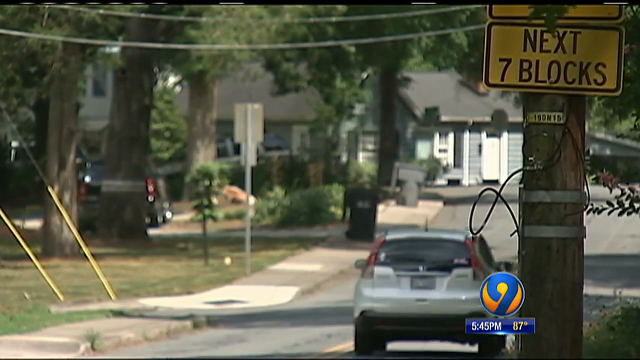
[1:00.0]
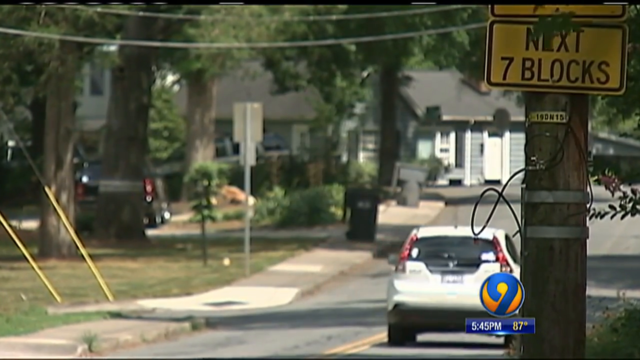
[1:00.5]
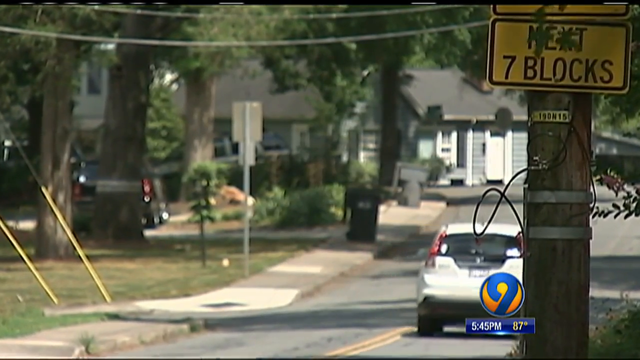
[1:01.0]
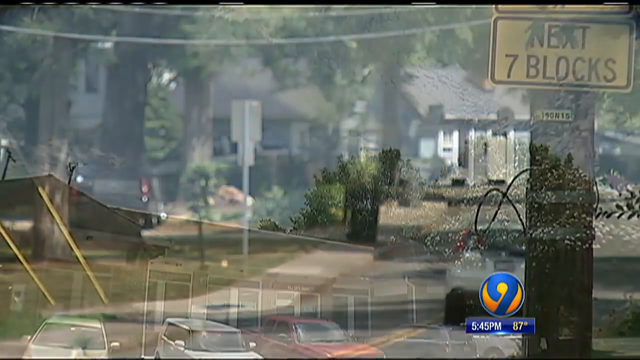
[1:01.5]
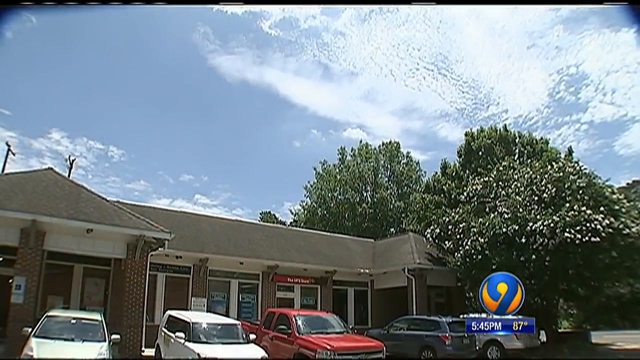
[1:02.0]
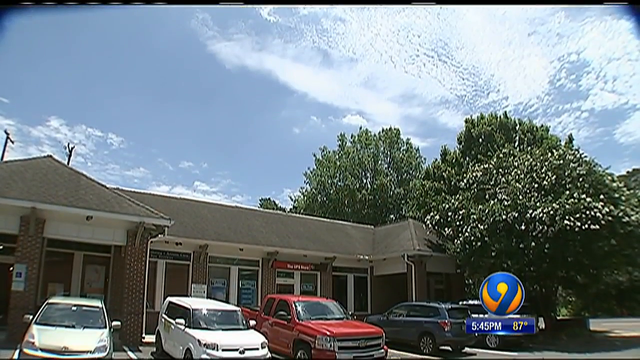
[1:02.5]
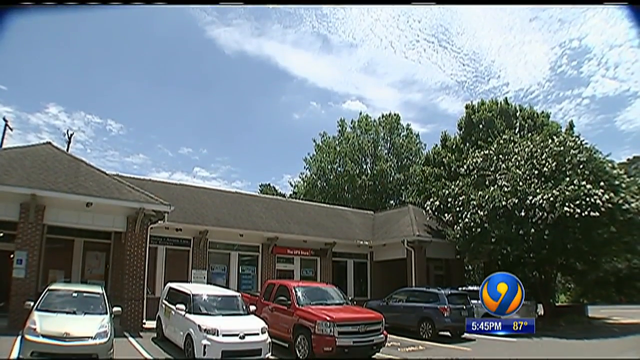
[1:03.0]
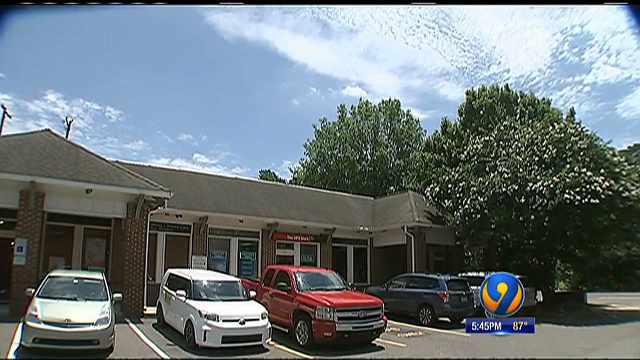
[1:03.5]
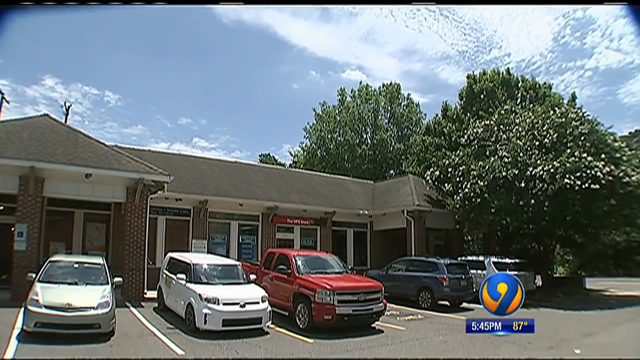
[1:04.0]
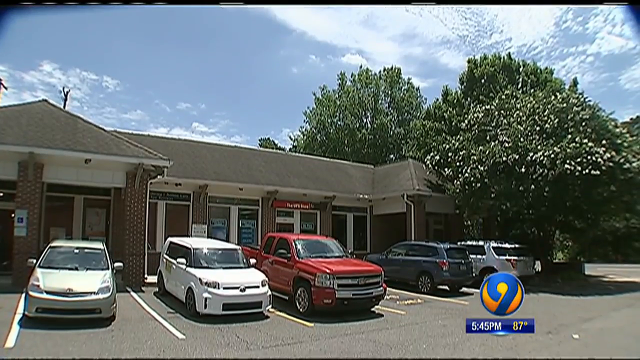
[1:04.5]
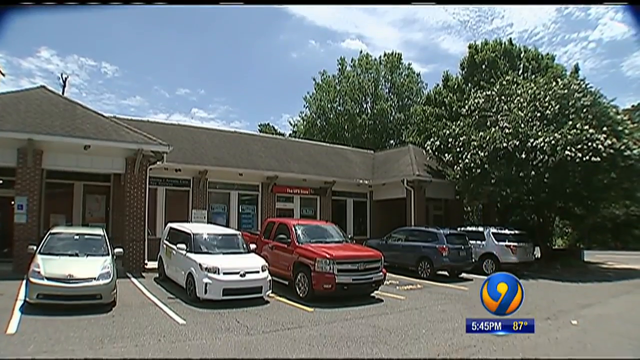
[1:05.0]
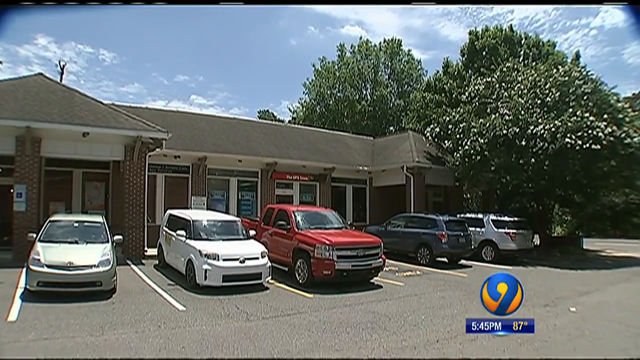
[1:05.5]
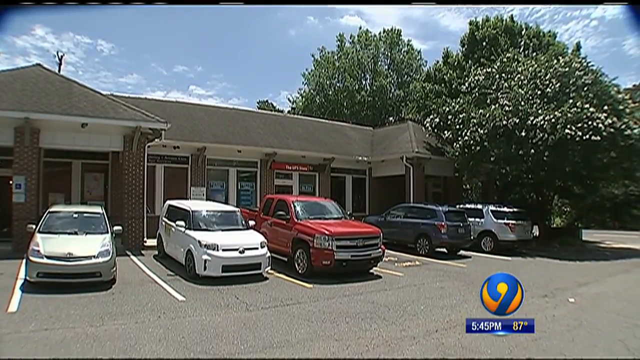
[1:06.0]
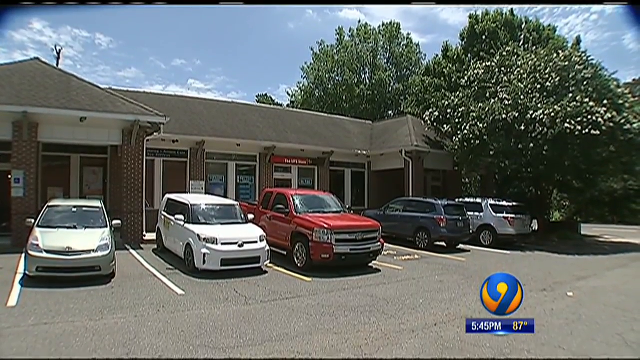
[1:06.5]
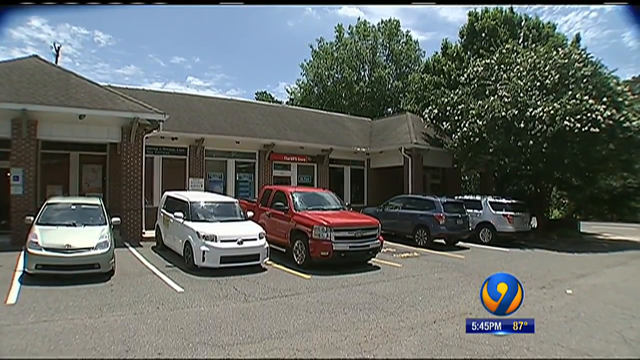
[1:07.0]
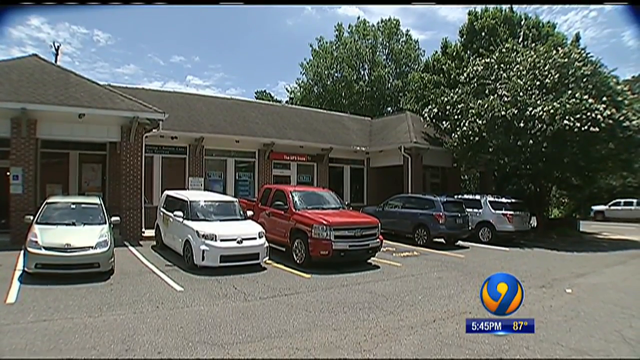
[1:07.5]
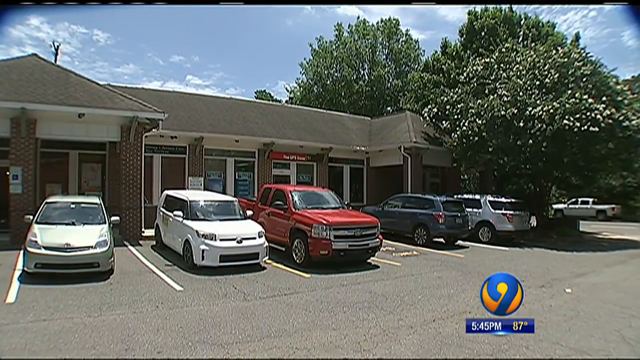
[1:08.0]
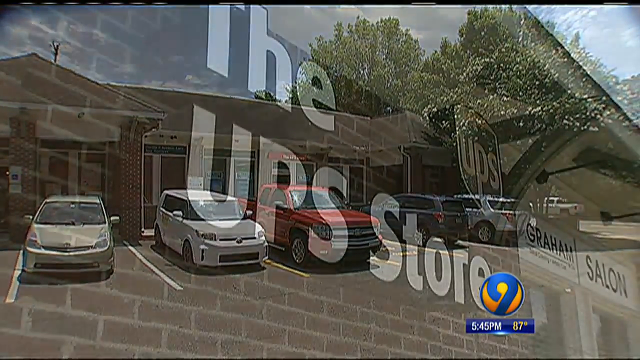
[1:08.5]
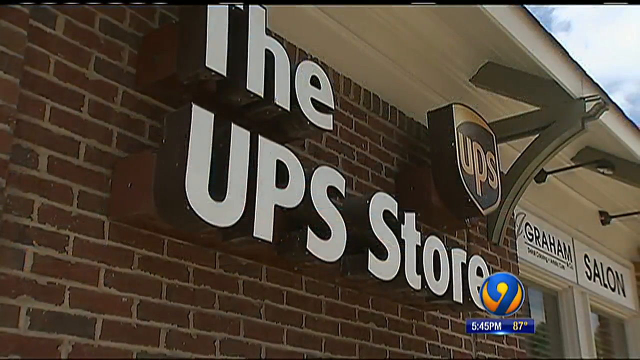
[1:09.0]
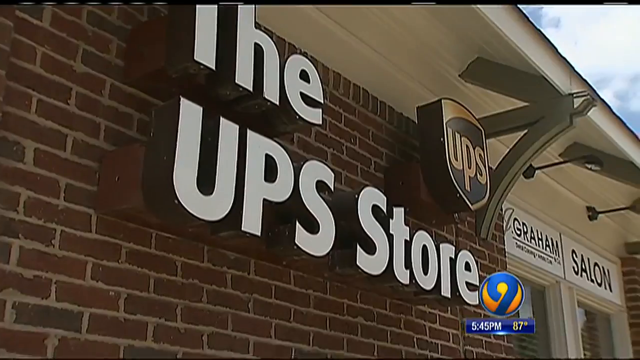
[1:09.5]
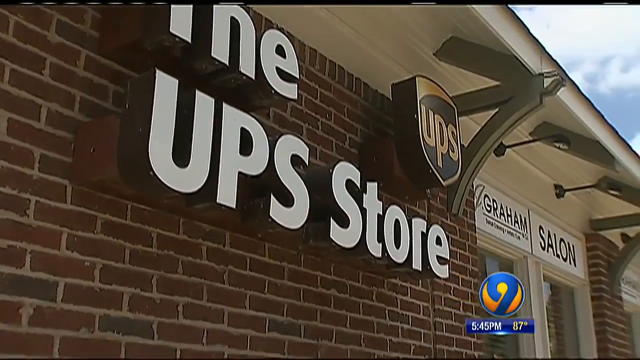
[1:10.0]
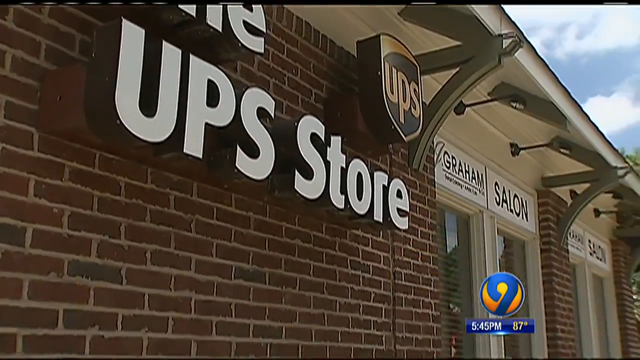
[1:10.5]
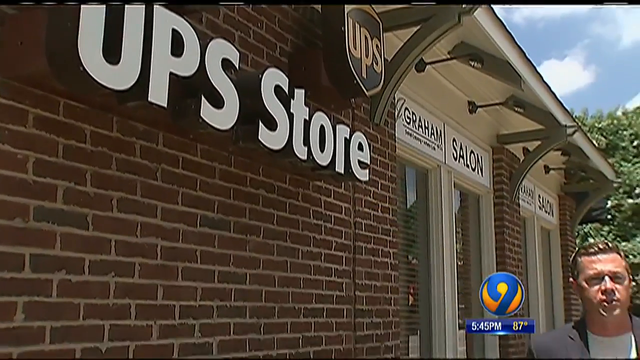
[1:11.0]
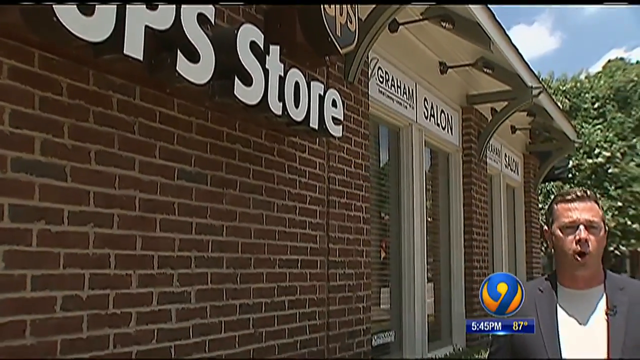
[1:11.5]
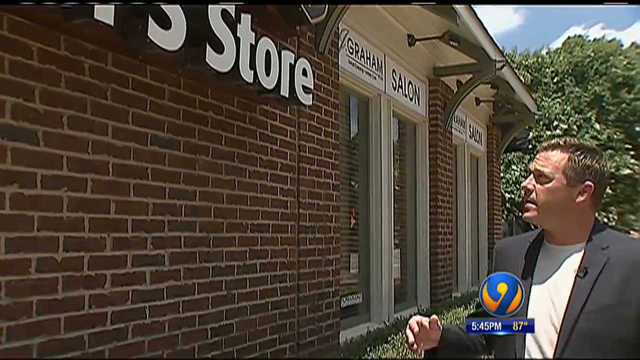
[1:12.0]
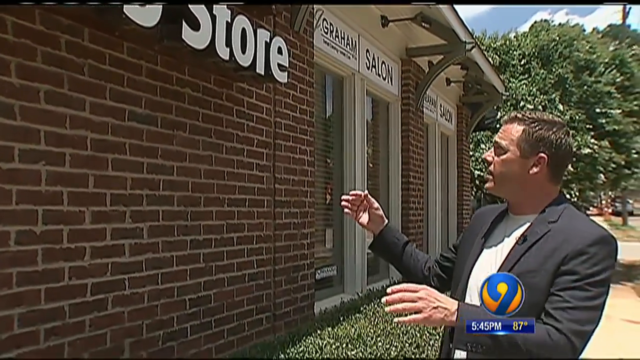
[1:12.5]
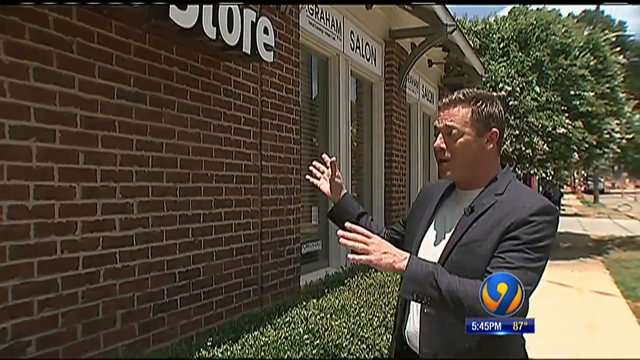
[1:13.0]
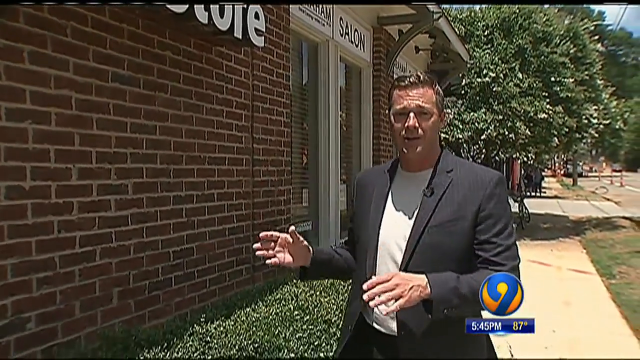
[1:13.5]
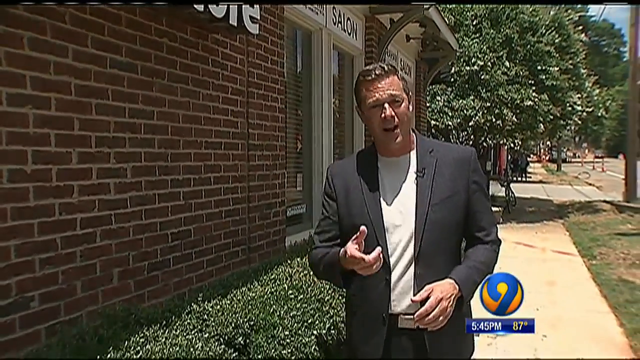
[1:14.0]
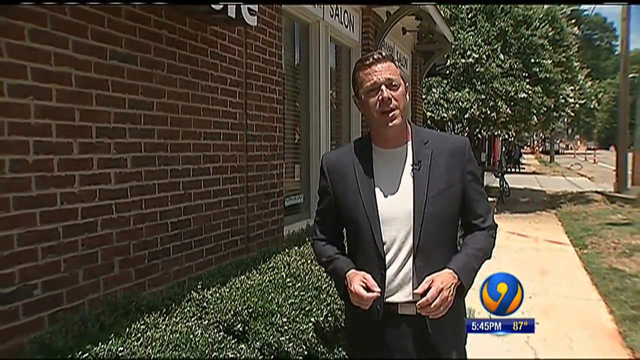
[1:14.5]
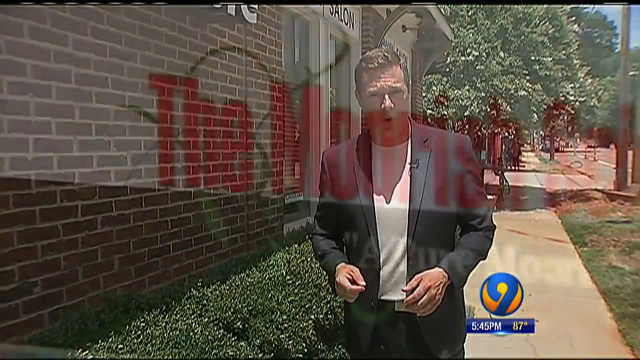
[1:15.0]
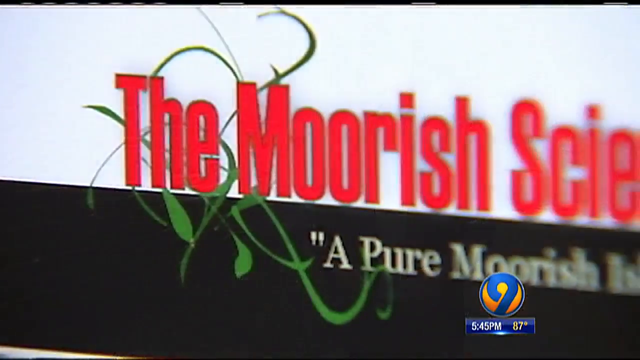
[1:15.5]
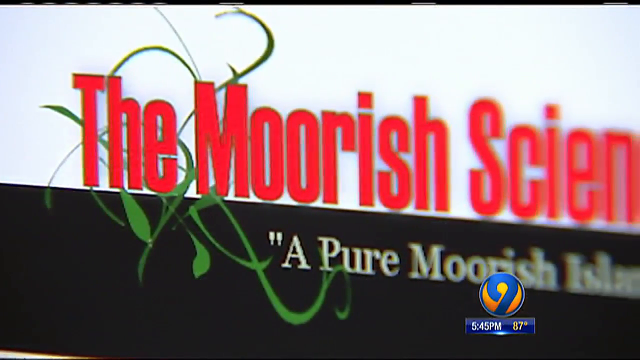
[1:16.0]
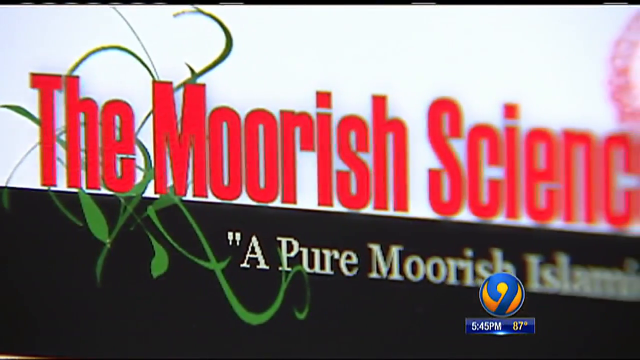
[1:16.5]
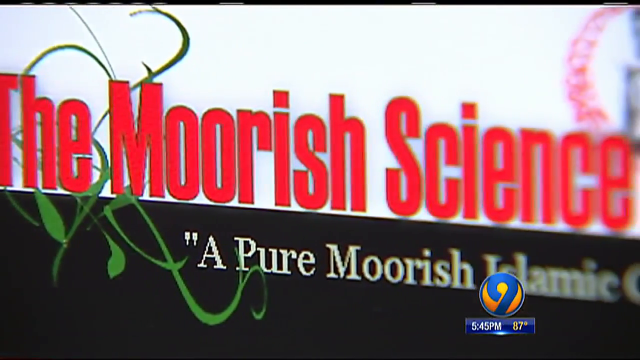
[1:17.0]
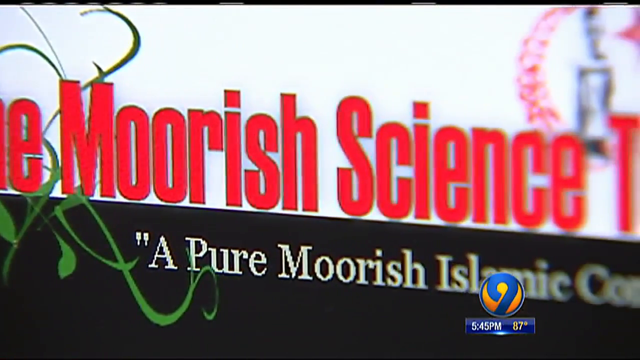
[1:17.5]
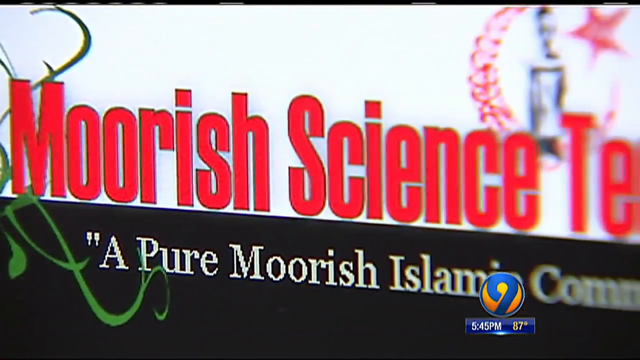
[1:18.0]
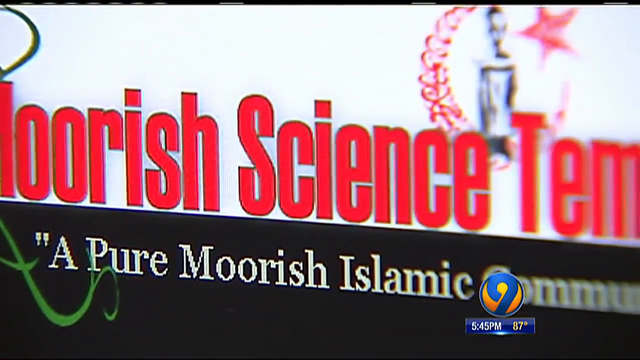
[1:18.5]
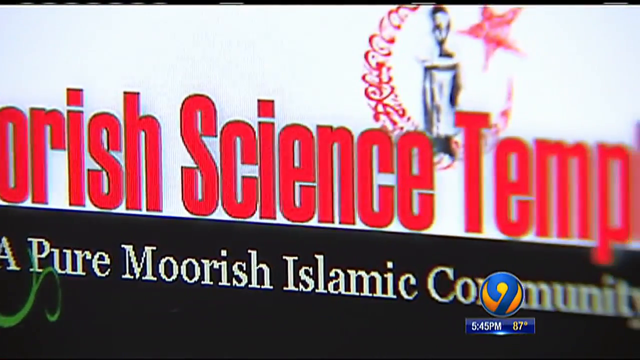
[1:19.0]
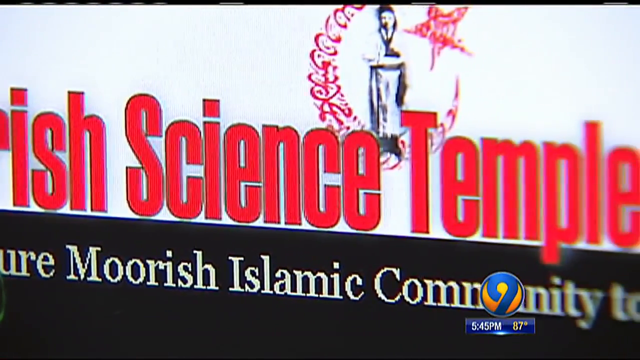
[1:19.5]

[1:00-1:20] A UPS store is shown, and the reporter points to it. He then looks at a website that reads "the Moorish Science, a pure Moorish Islamic community."